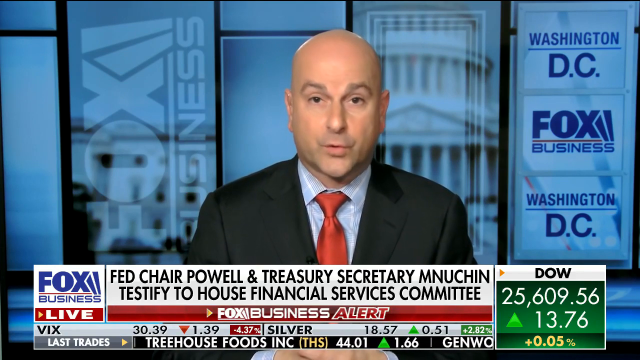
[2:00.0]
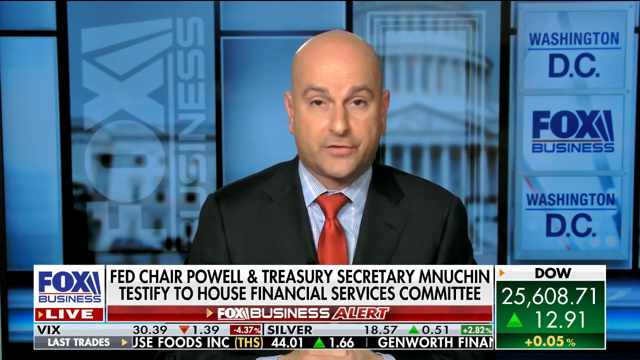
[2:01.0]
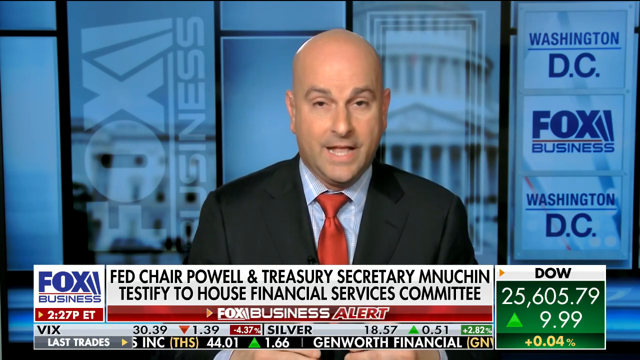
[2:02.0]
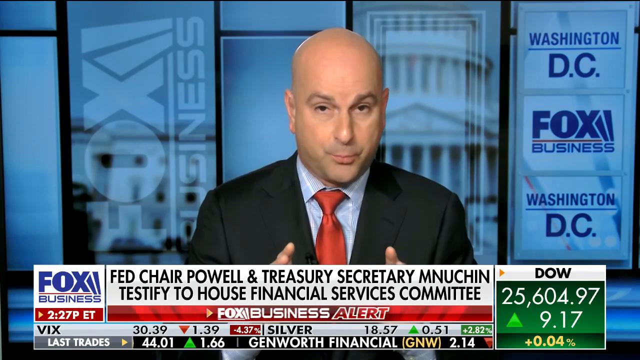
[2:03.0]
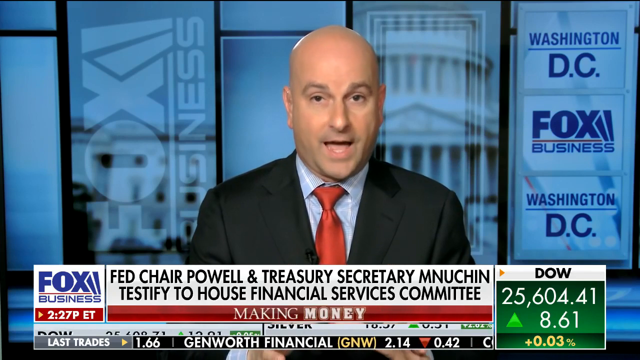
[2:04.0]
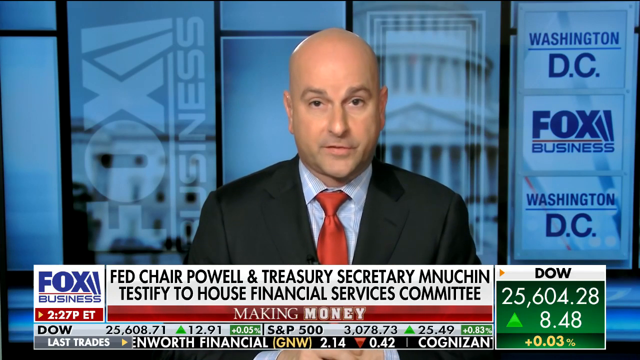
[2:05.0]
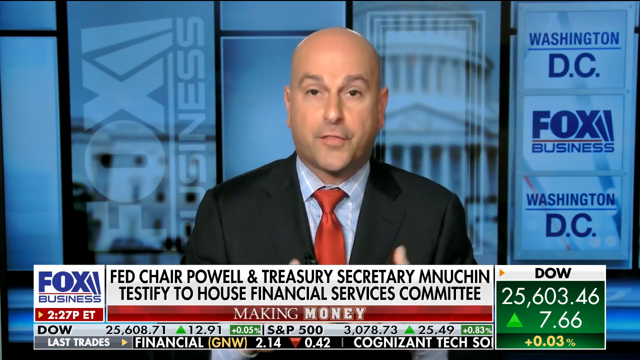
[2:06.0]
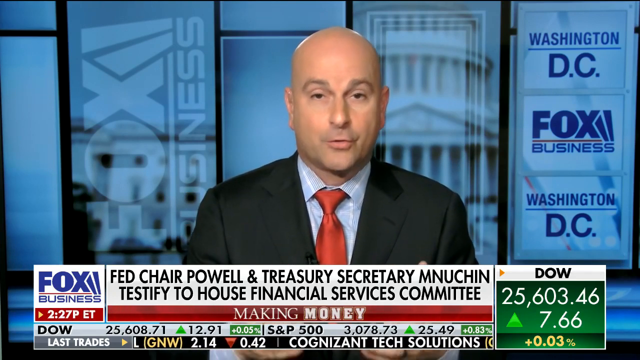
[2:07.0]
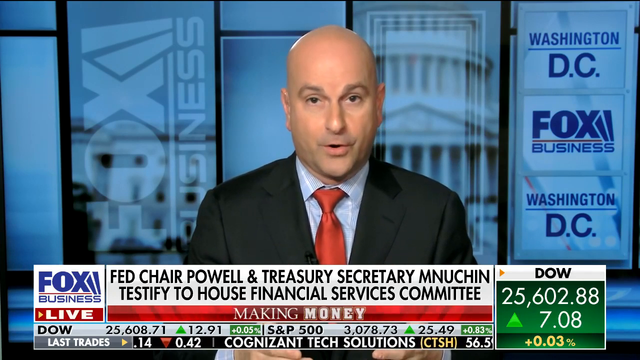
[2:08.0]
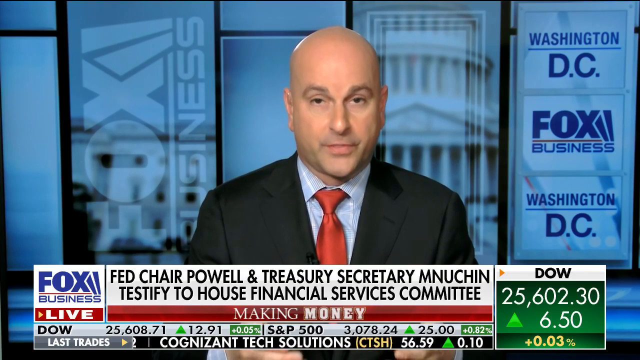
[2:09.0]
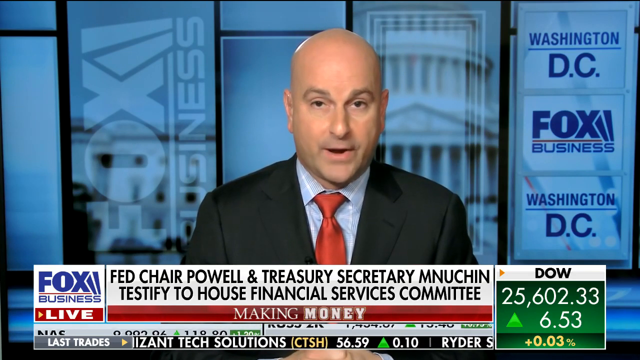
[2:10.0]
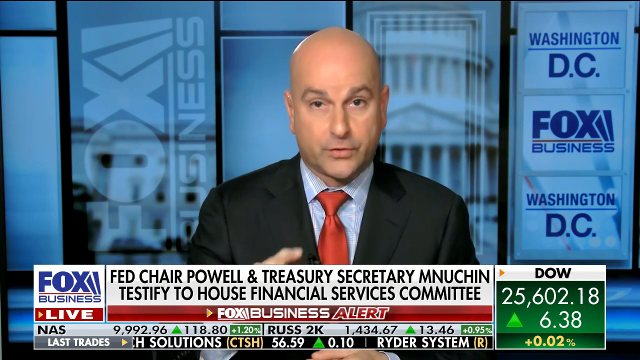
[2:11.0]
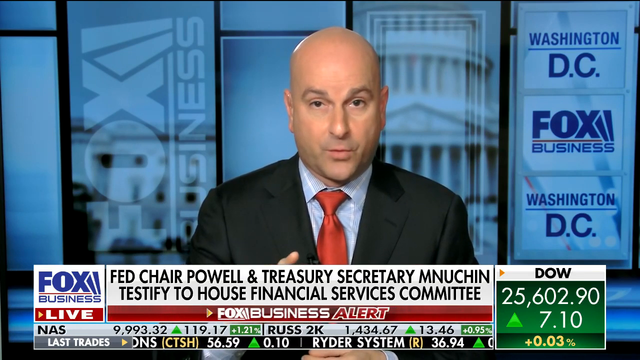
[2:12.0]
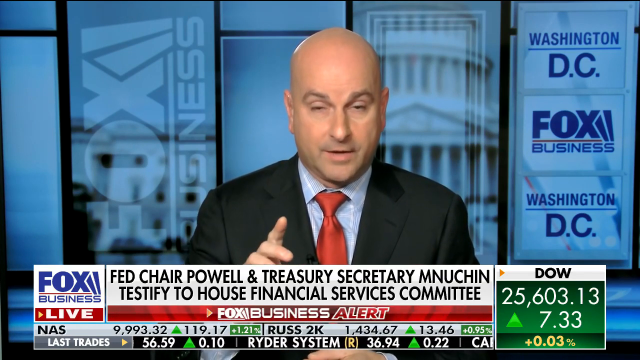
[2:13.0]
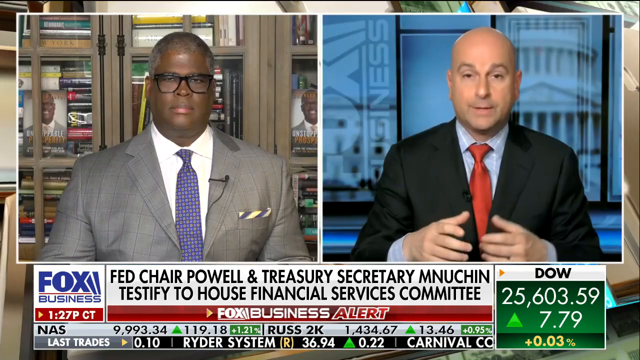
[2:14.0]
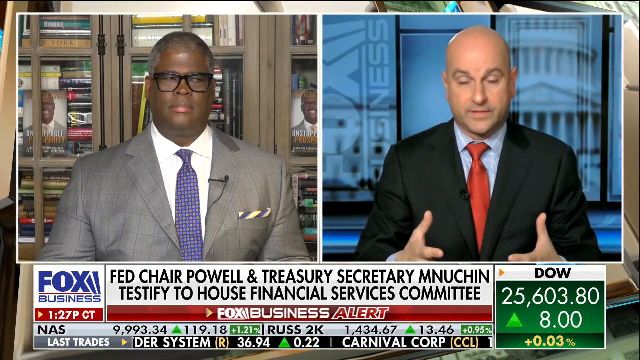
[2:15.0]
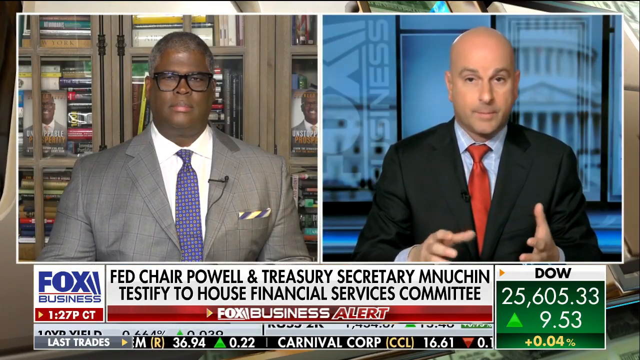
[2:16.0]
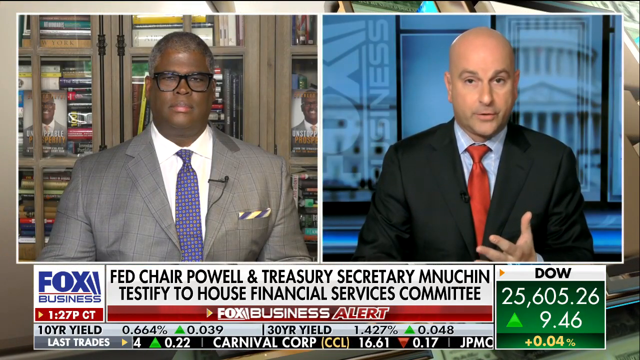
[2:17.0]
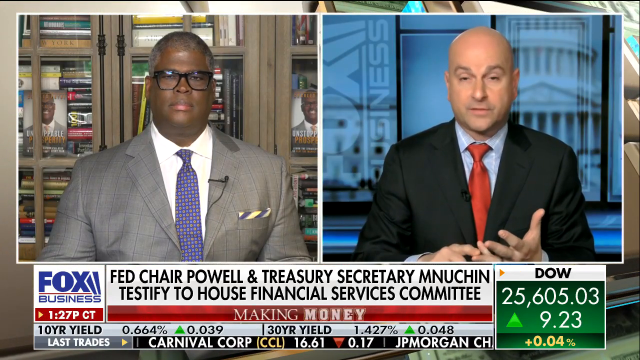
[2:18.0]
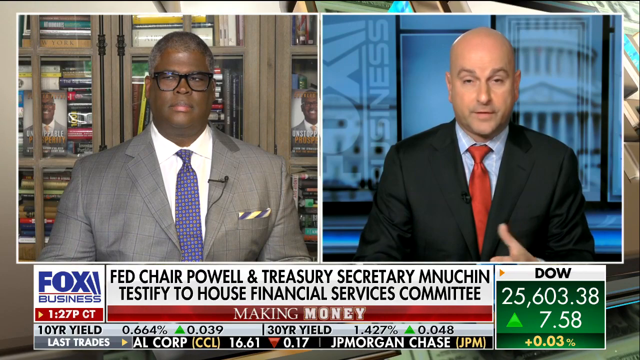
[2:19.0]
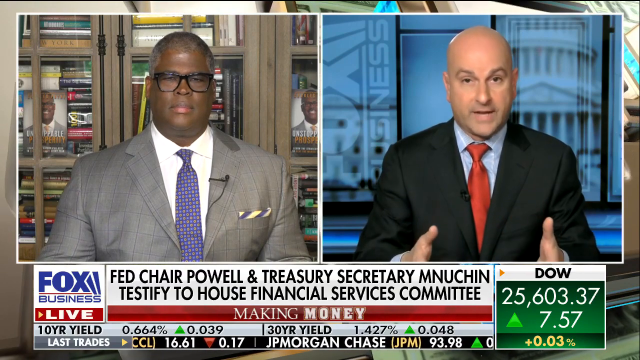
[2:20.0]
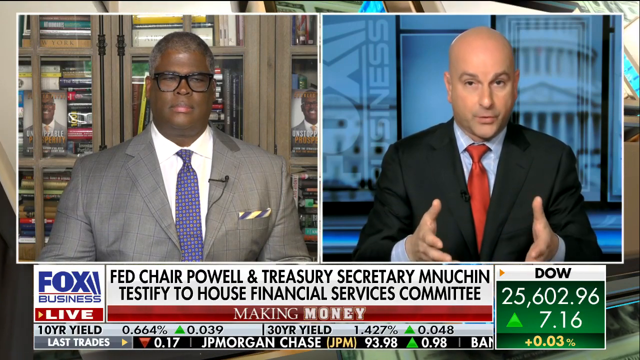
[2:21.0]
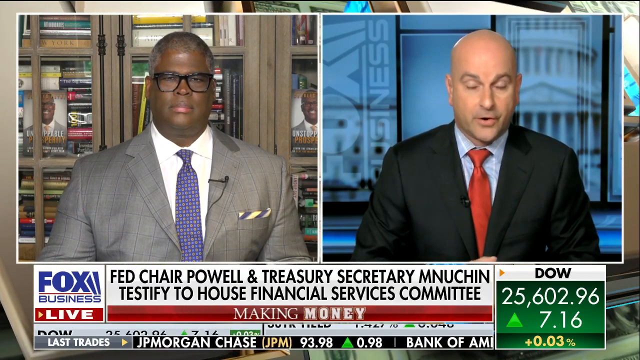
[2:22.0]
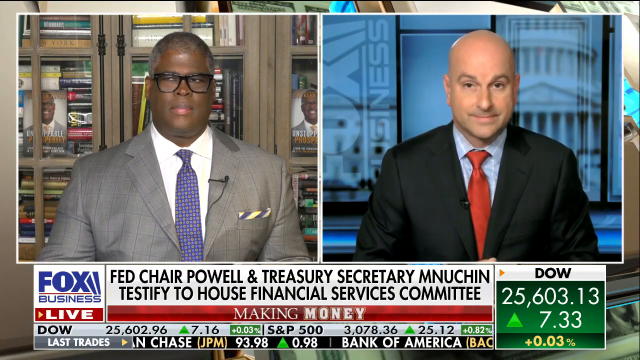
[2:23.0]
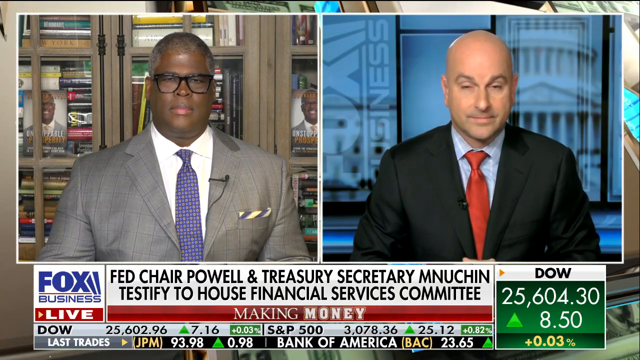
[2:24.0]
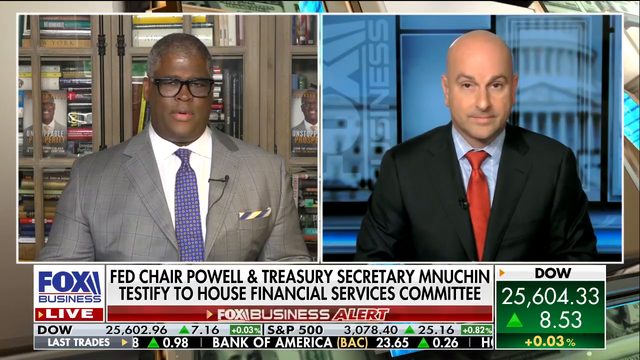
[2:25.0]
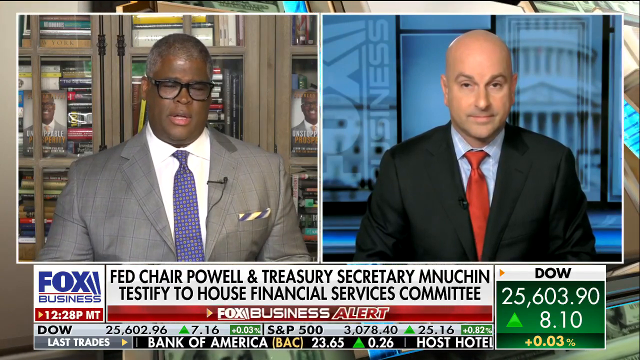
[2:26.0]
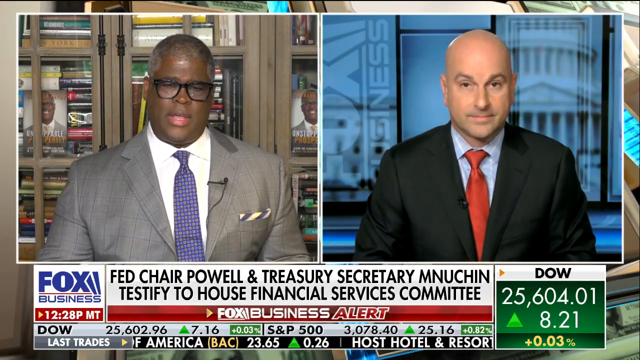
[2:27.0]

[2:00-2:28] The bald man in a red tie, white shirt and black blazer talks with many hand gestures, moving both hands up and down; his hands are barely visible because the headlines cover them. A two-camera view then shows the black man in a grey blazer, white shirt and blue tie, with glasses, talking to the white man in the black blazer, red tie and white shirt. The two reporters end the video talking together. "Fox Business Alert" appears on screen.